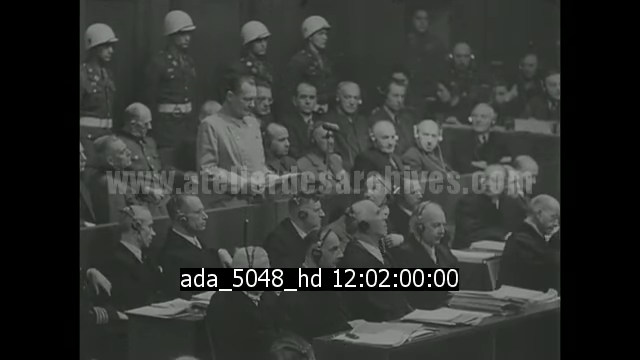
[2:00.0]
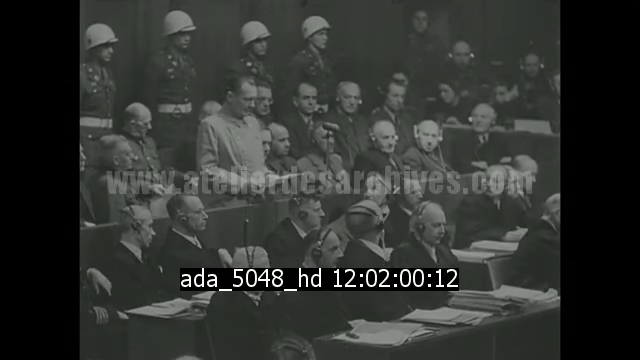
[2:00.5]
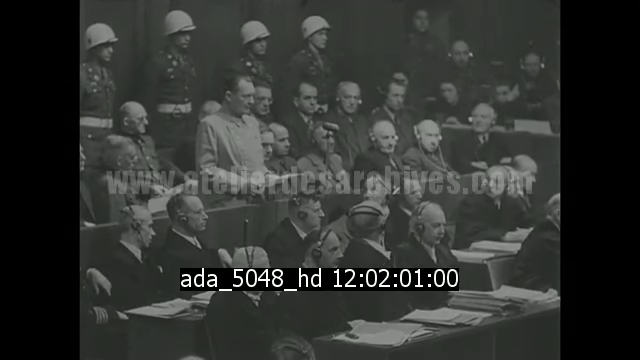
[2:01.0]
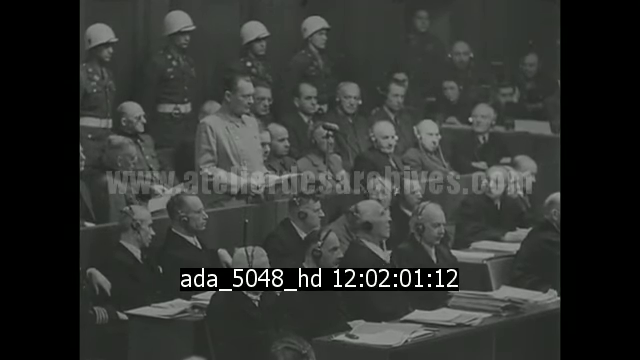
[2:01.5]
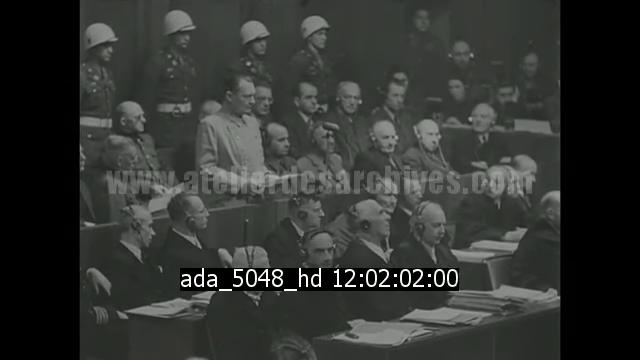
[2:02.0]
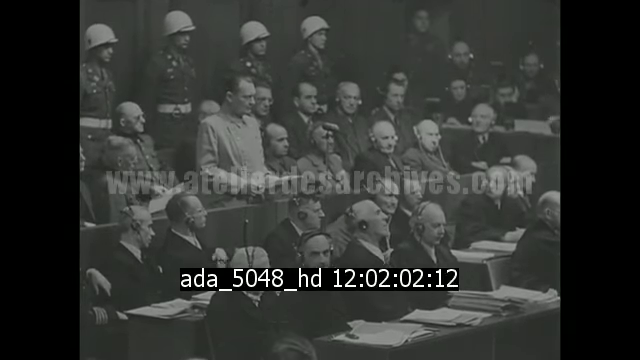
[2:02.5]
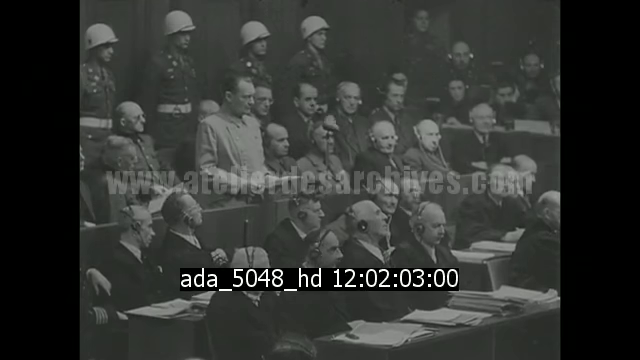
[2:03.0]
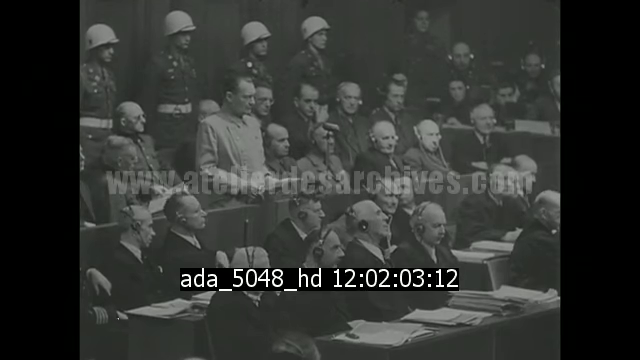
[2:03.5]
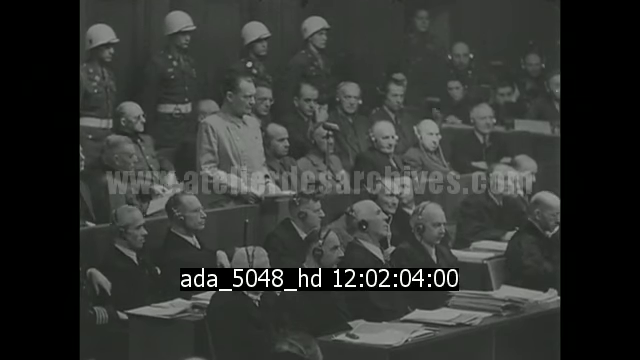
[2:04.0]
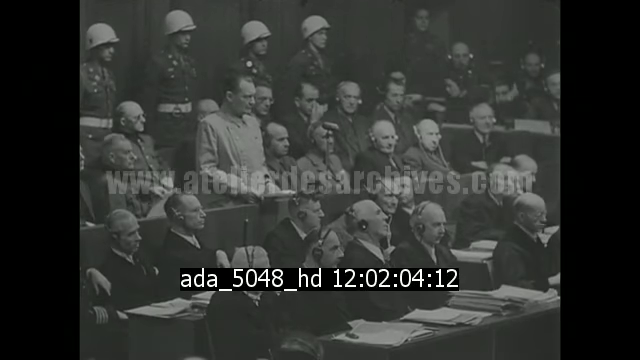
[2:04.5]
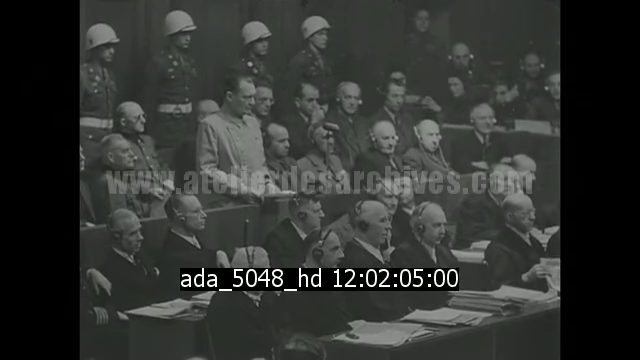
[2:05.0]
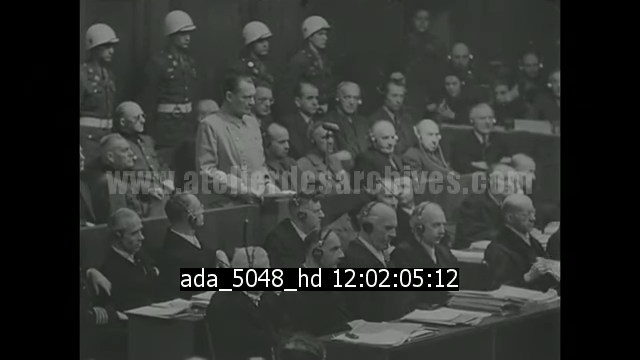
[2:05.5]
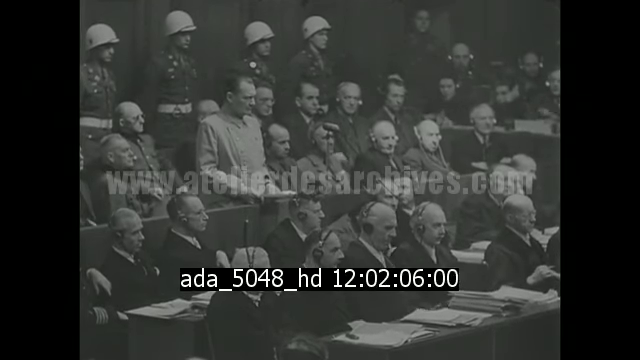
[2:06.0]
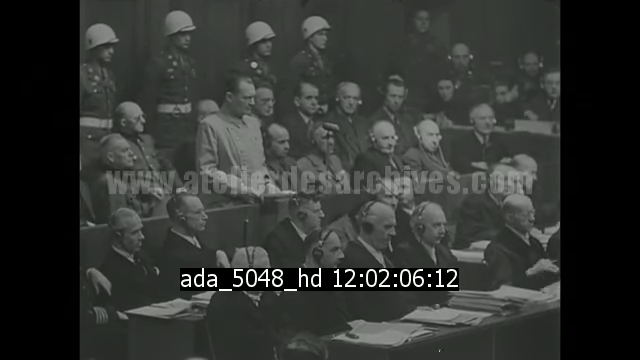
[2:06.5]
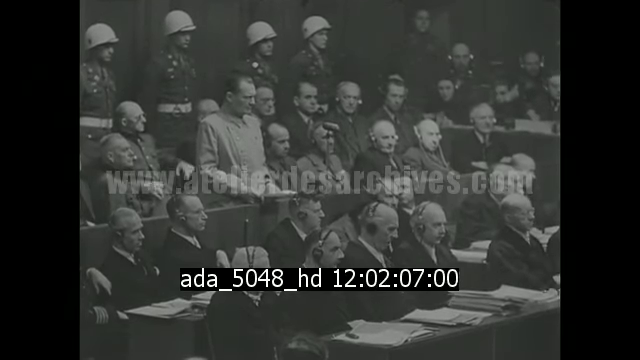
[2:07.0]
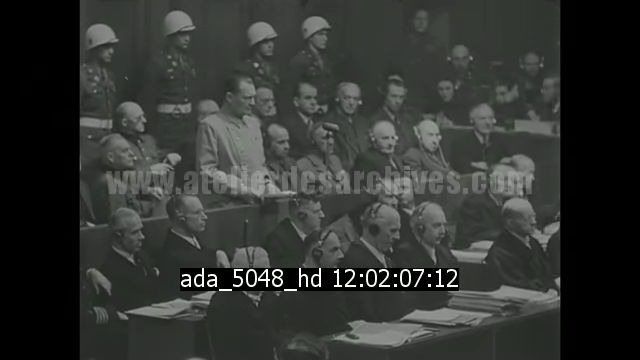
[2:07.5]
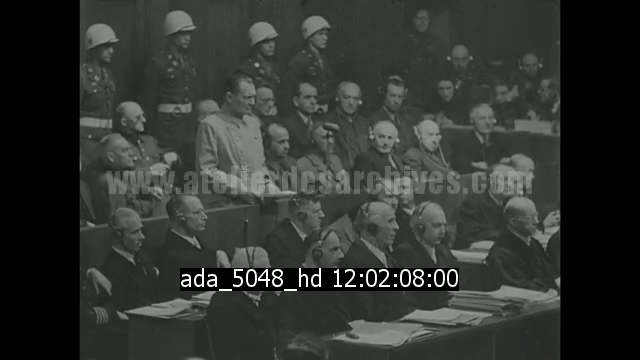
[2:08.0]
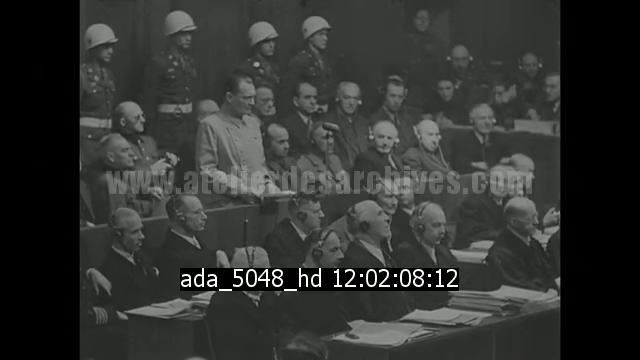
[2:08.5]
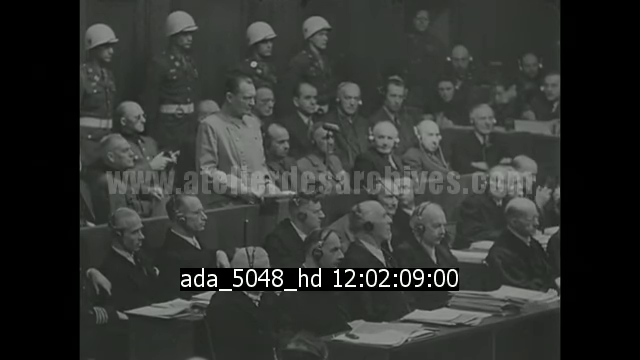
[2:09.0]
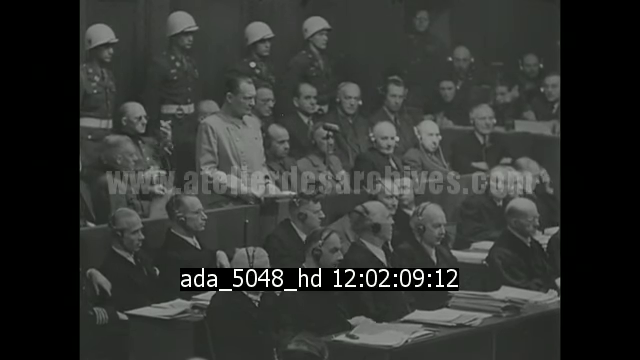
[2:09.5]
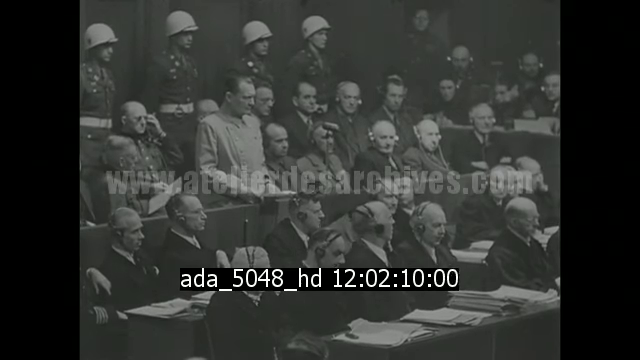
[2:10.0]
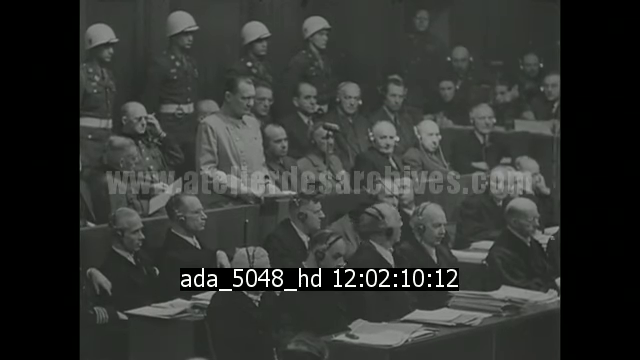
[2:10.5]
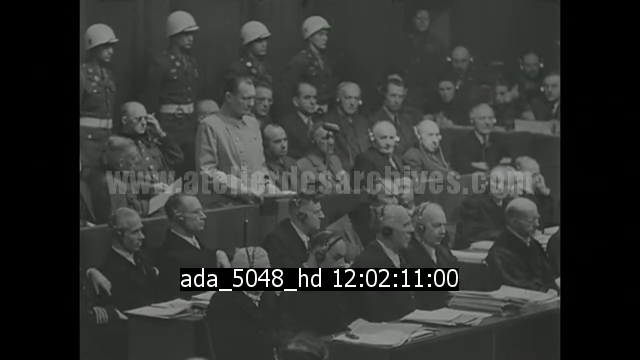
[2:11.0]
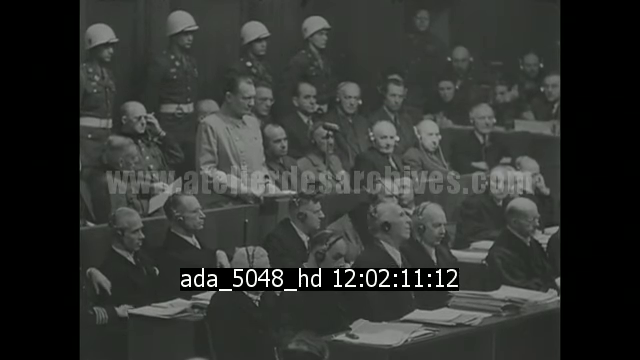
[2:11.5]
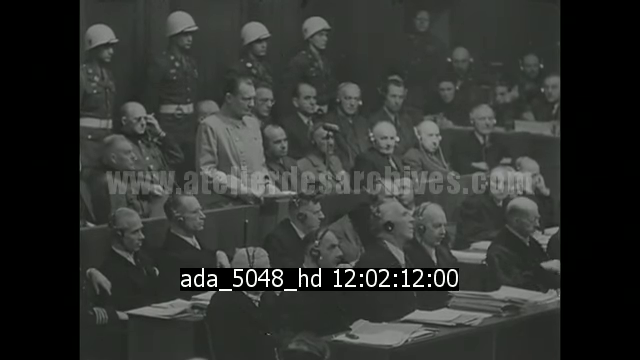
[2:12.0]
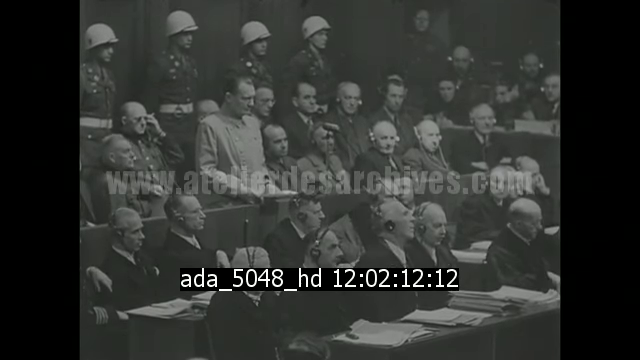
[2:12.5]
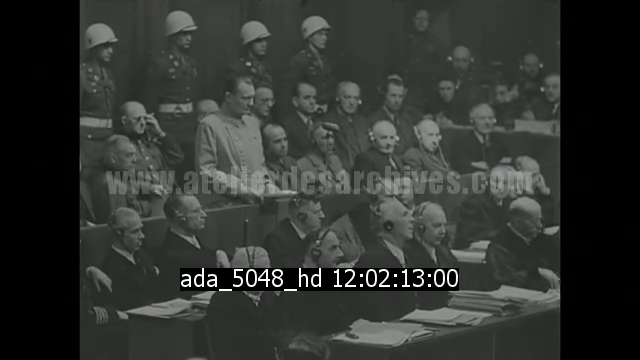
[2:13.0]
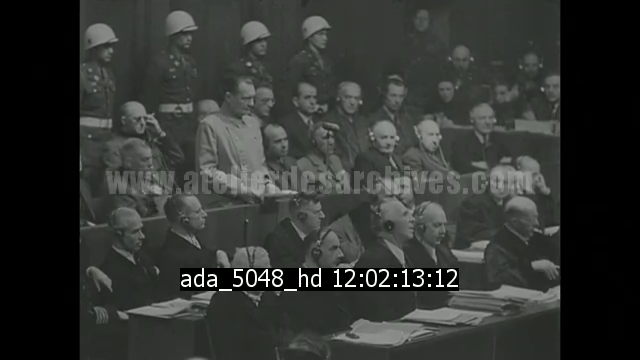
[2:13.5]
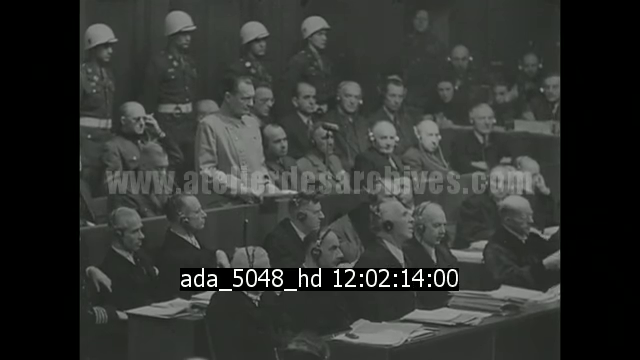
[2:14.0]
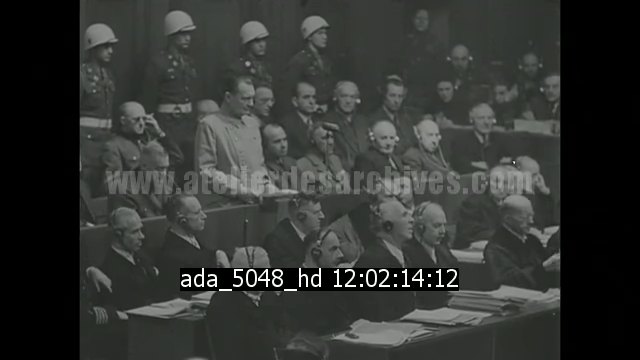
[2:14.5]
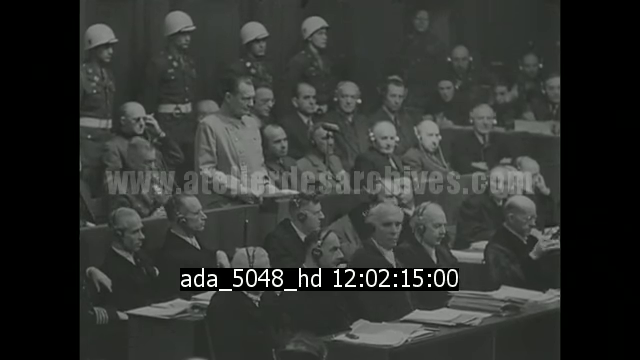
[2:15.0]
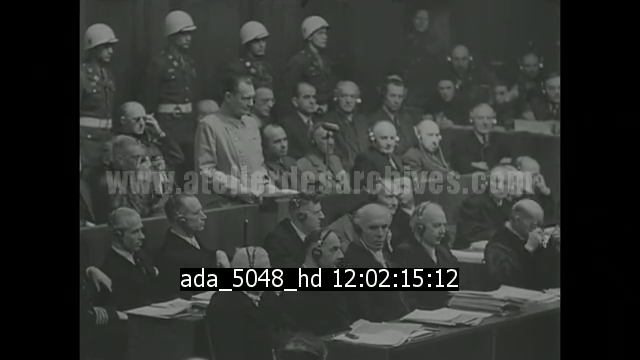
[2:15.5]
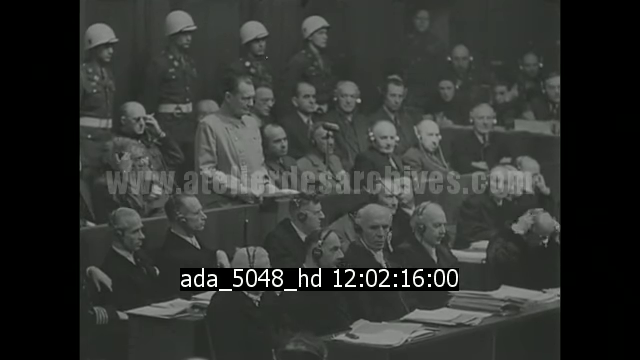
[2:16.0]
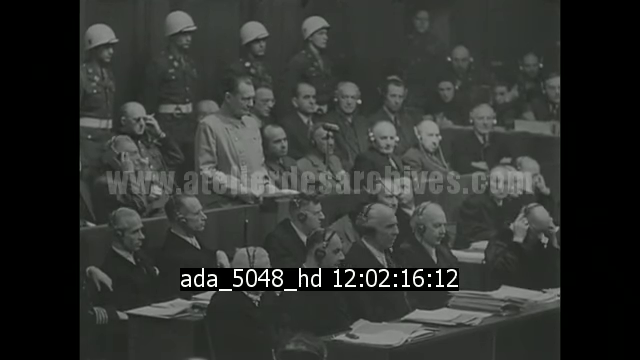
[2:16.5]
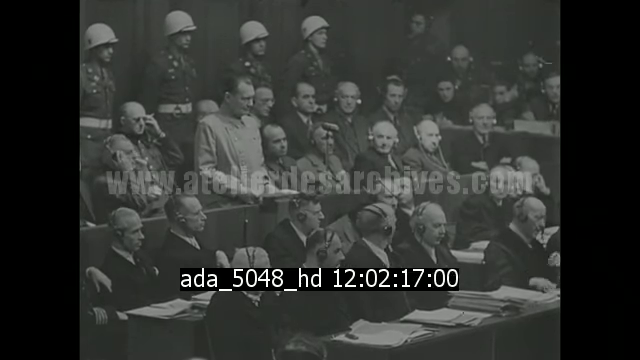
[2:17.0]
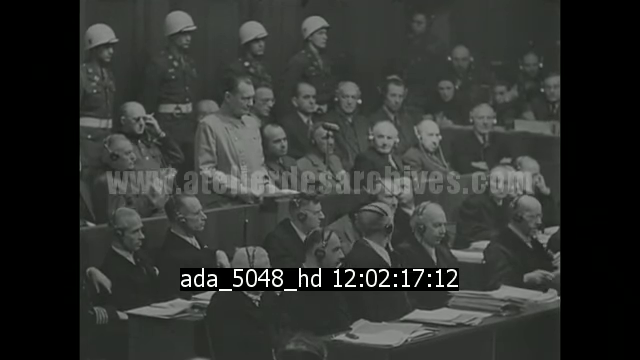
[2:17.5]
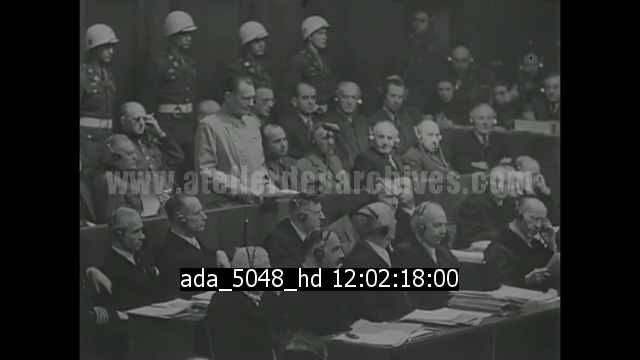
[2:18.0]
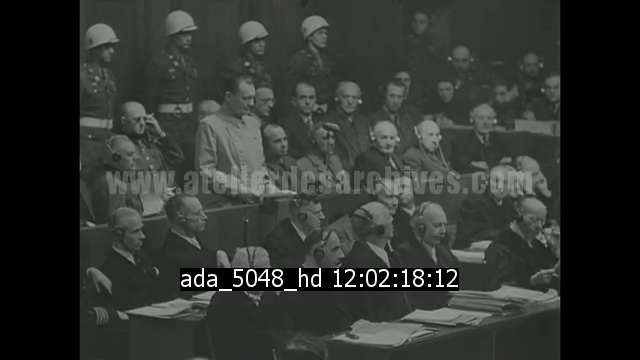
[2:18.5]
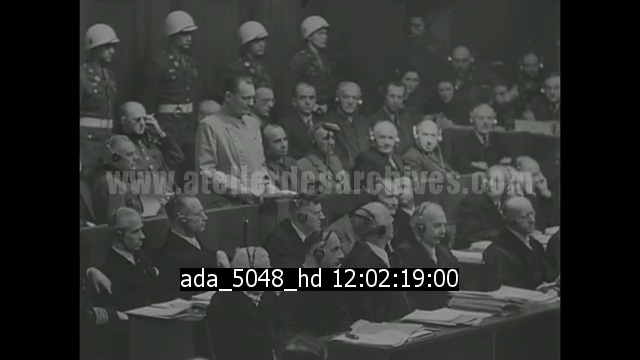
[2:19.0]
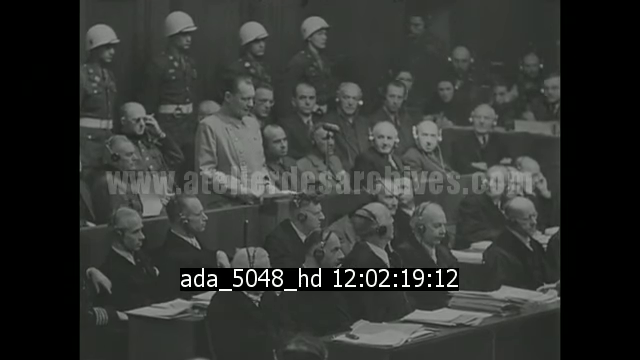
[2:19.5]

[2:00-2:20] Many soldiers are all around the area, guarding the doors. There are spectators who may be government officials, and they all have earpieces on. People are making their case to the floor.